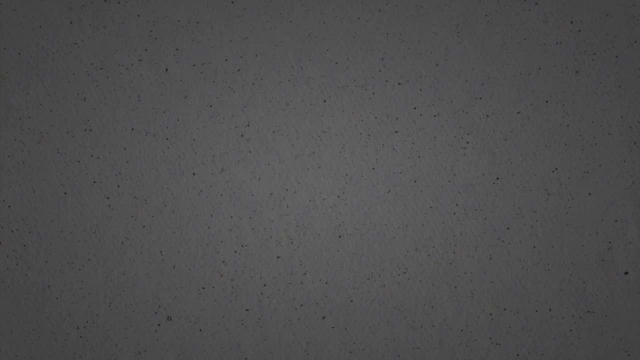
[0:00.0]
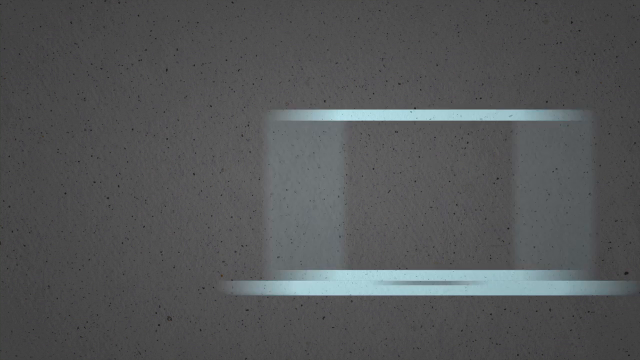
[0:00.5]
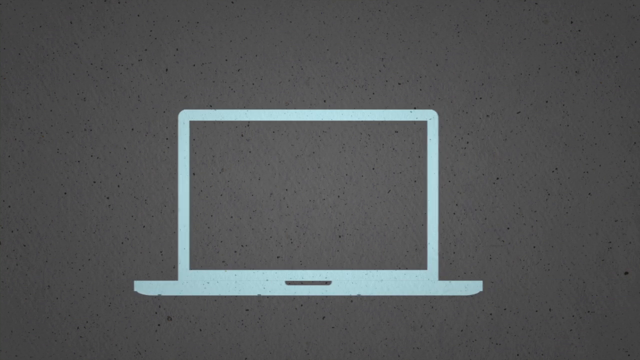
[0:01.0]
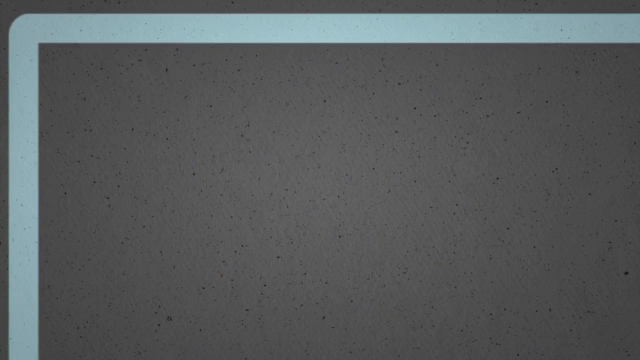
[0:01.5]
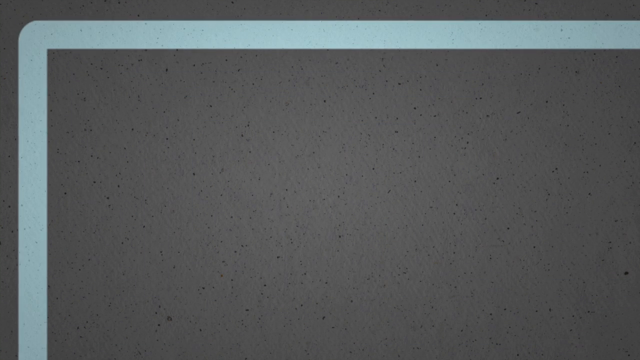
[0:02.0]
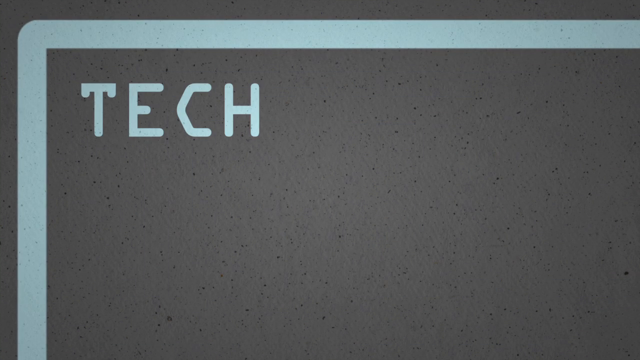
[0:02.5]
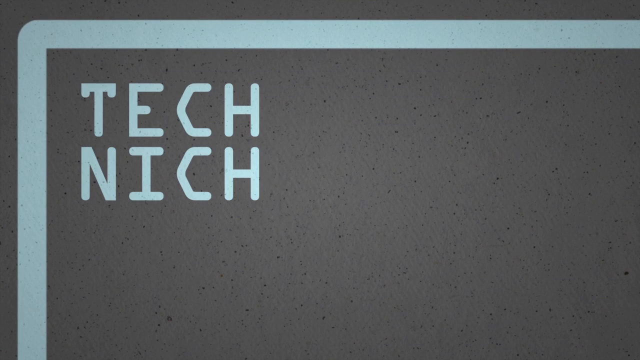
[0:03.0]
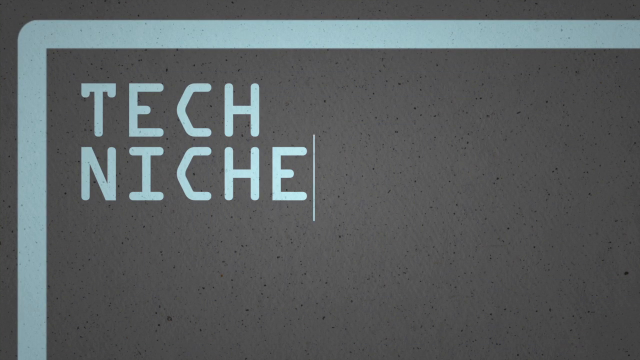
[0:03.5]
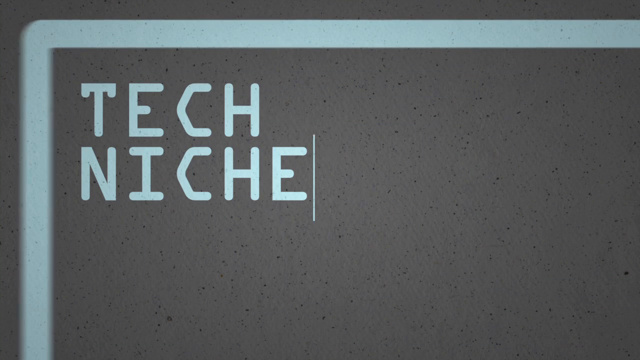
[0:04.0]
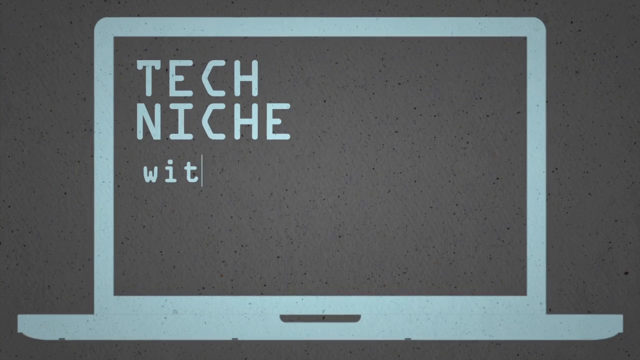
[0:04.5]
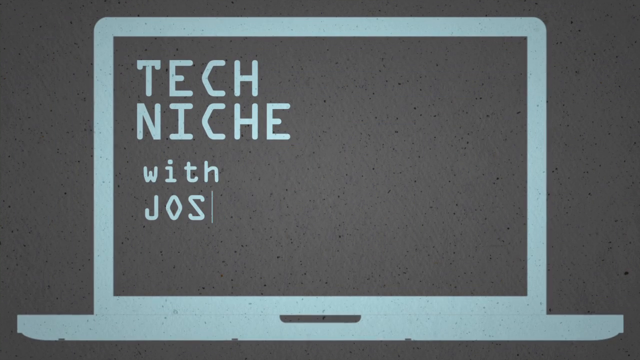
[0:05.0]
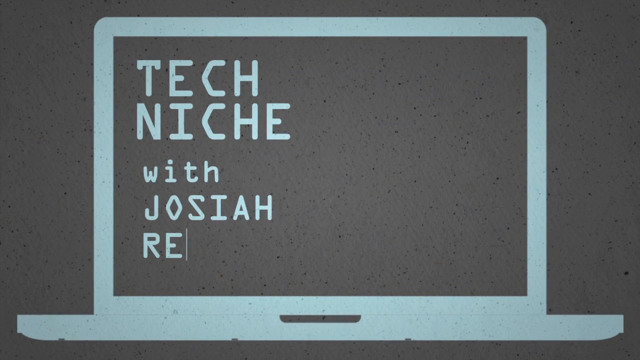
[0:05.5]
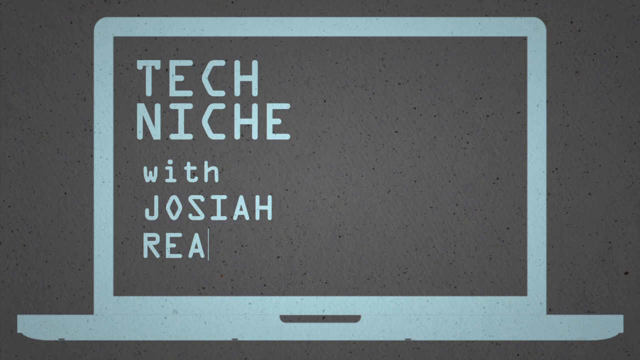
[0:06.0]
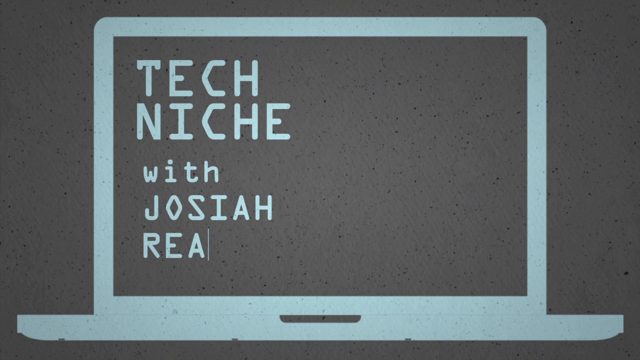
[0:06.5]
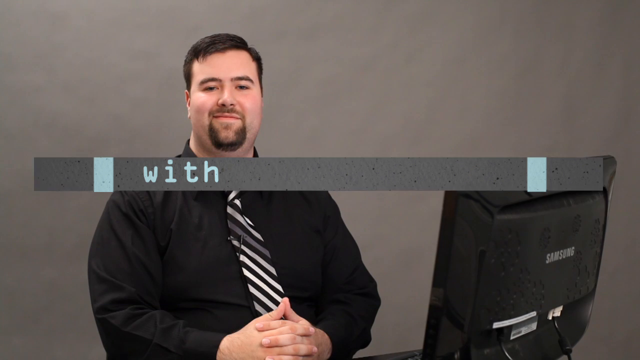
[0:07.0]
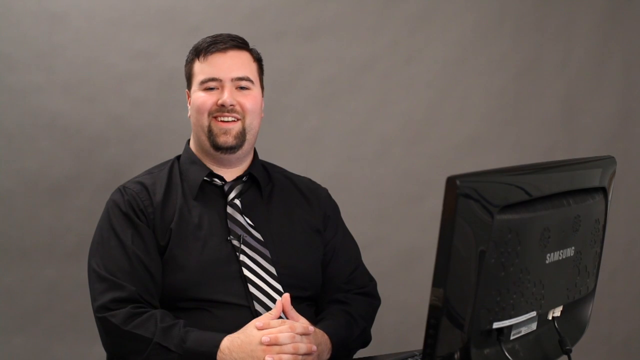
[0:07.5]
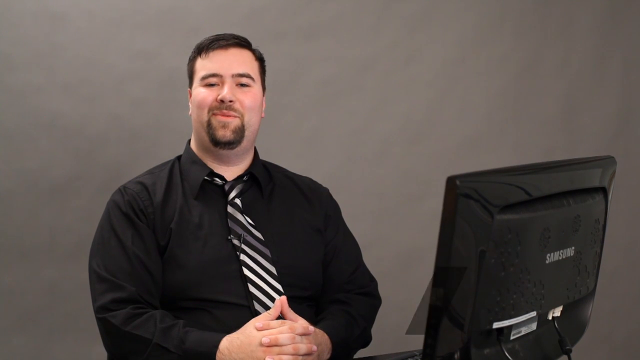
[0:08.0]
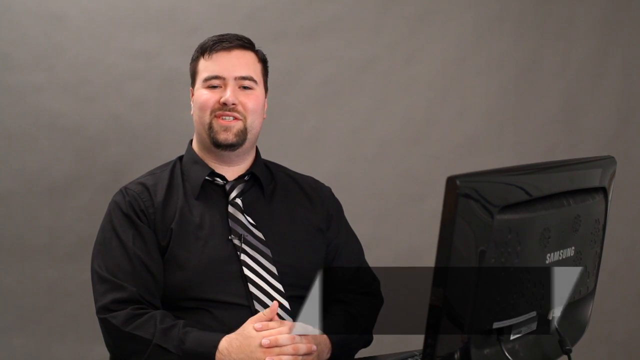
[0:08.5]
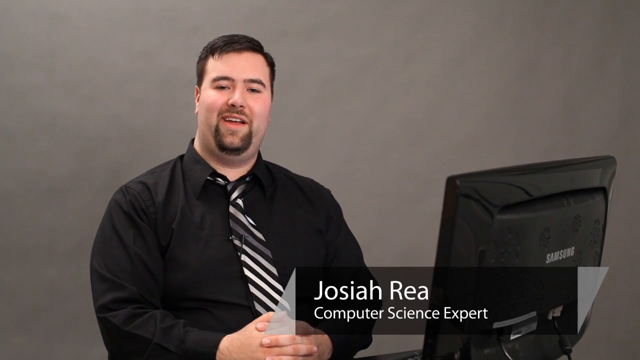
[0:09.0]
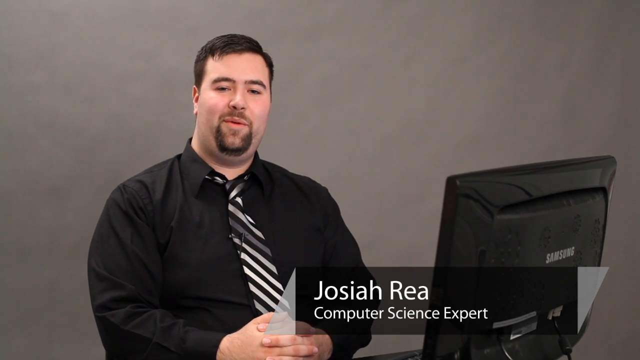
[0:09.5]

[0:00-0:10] The video opens on a dark gray concrete background. A cyan outline image of a laptop slides in from the right side of the screen into the middle, and the view zooms into the top left of the laptop screen. In the top left corner, the words "tech niche" are typed out in a cyborg-type font, and below them the words "with Josiah Ray" appear. This then disappears and turns into video of a man speaking in front of a computer. He wears a black shirt and a striped gray and black tie and looks very happy as he talks. On the bottom right, his name pops up: "Josiah Ray, computer science expert."